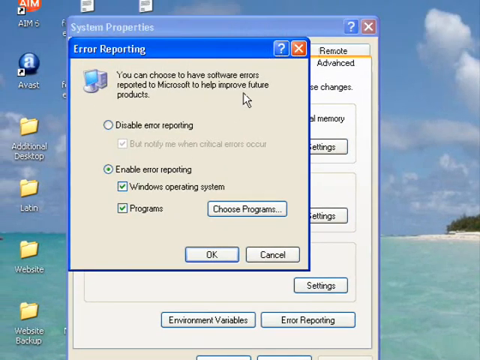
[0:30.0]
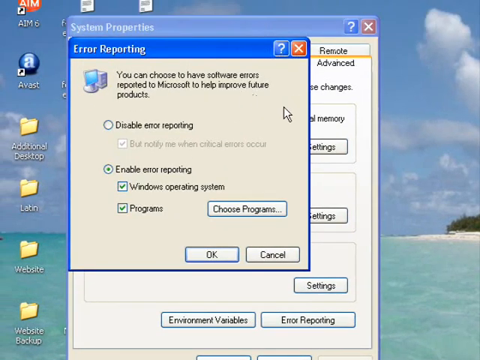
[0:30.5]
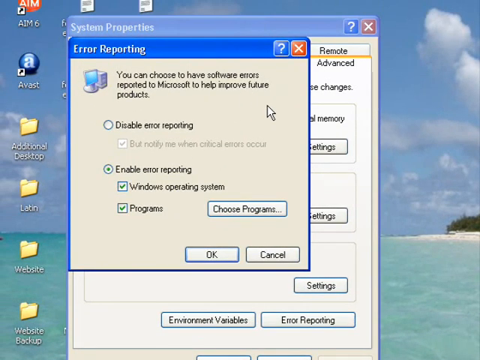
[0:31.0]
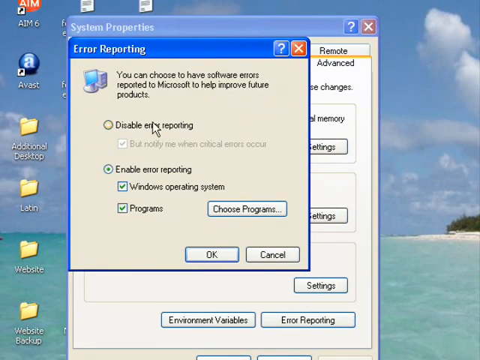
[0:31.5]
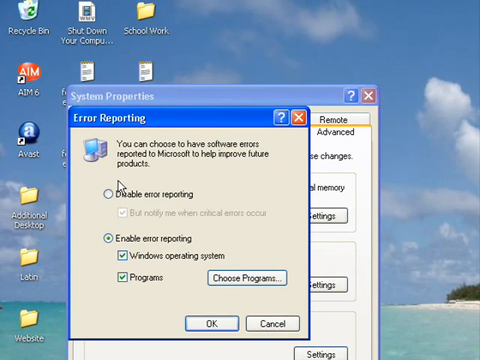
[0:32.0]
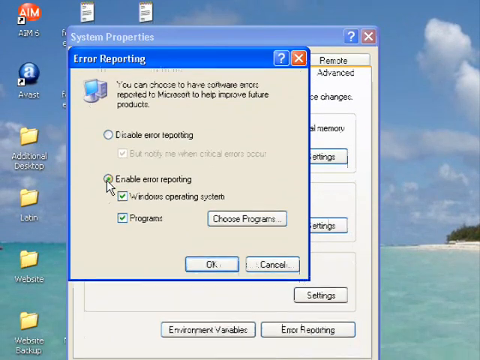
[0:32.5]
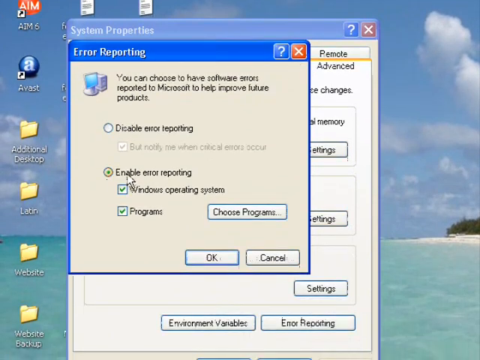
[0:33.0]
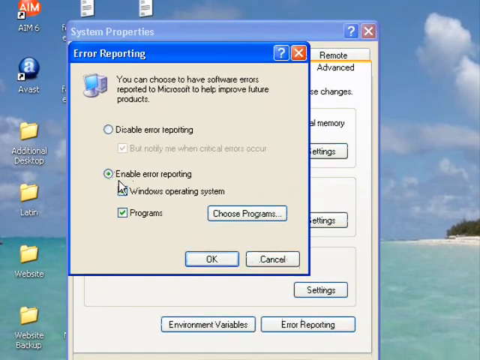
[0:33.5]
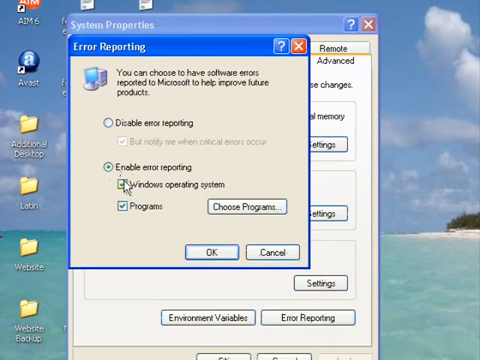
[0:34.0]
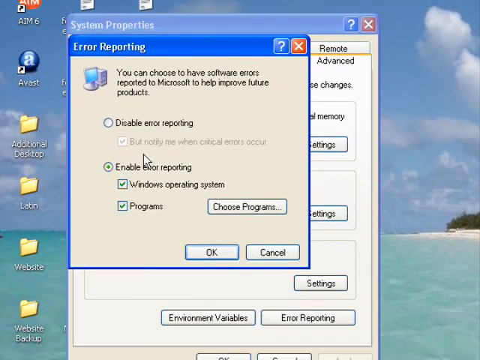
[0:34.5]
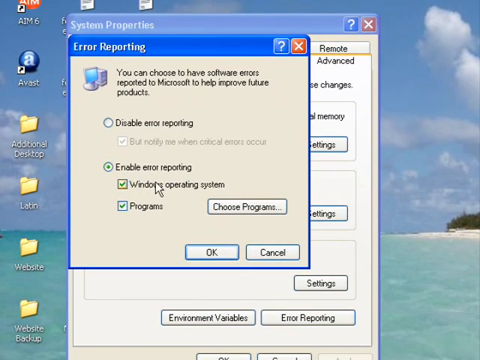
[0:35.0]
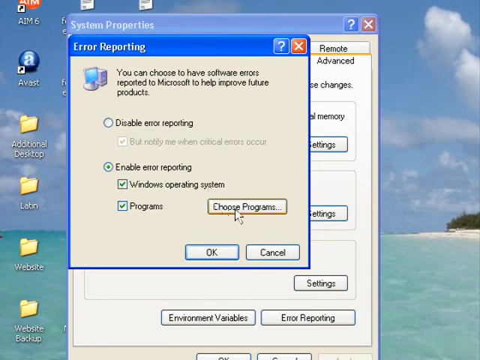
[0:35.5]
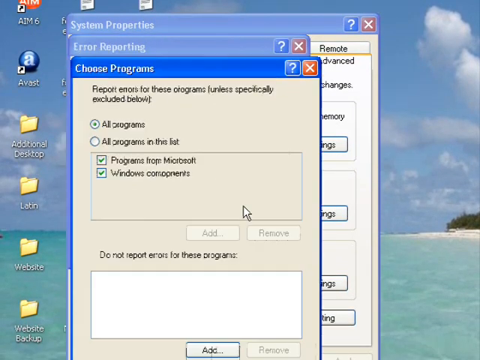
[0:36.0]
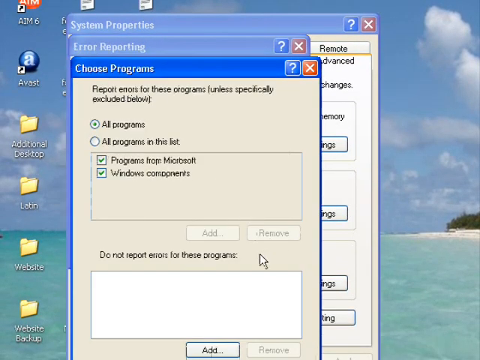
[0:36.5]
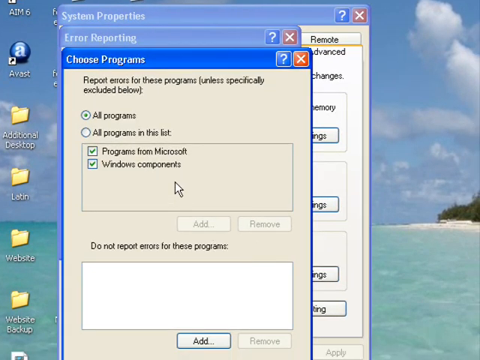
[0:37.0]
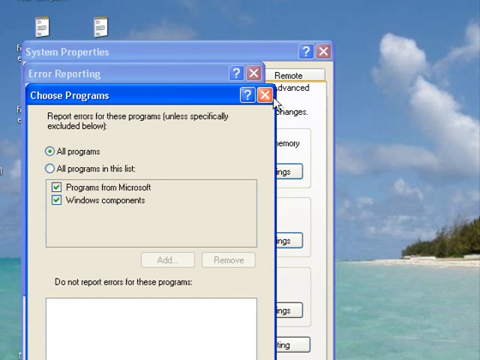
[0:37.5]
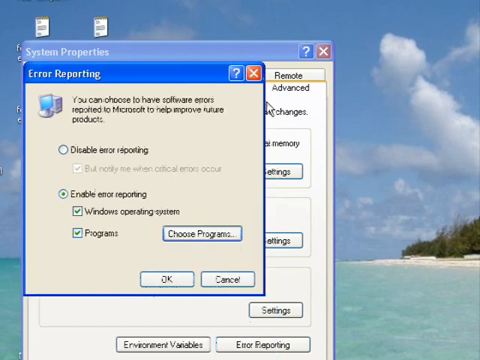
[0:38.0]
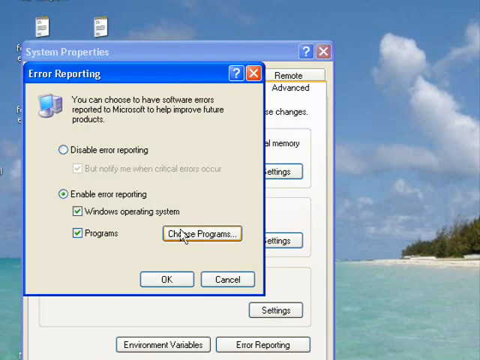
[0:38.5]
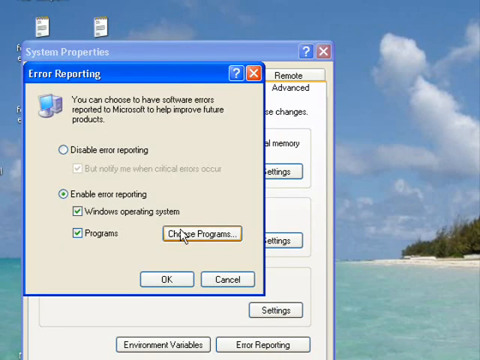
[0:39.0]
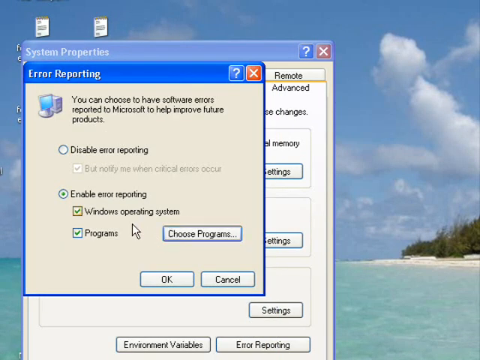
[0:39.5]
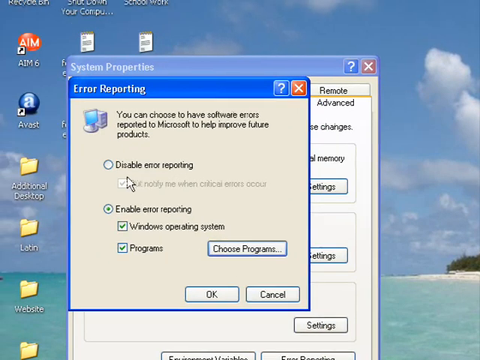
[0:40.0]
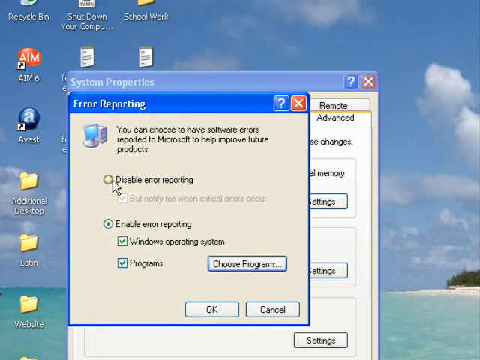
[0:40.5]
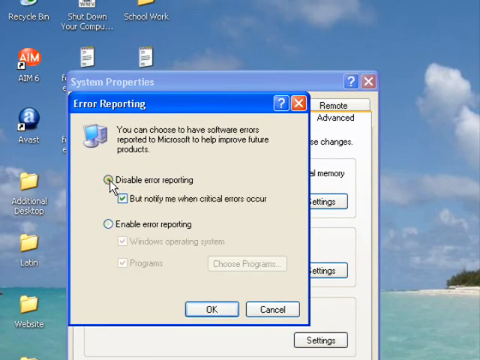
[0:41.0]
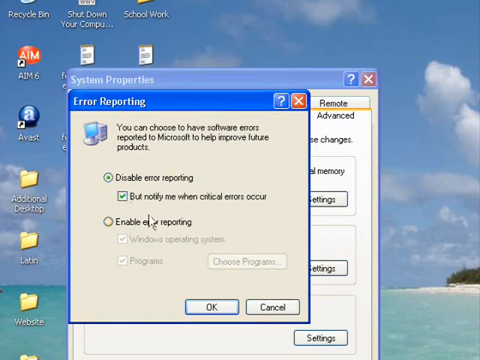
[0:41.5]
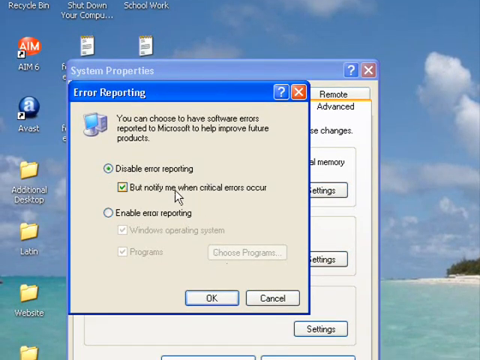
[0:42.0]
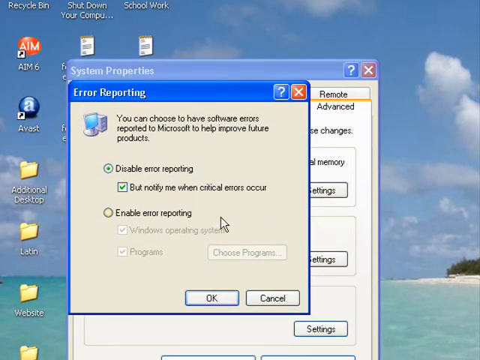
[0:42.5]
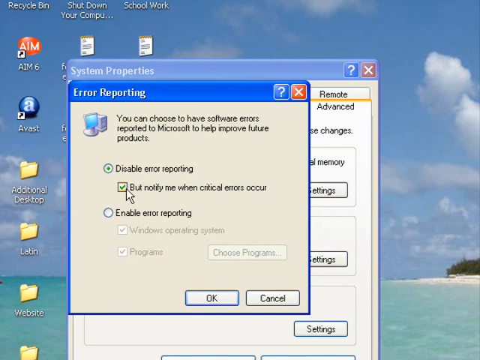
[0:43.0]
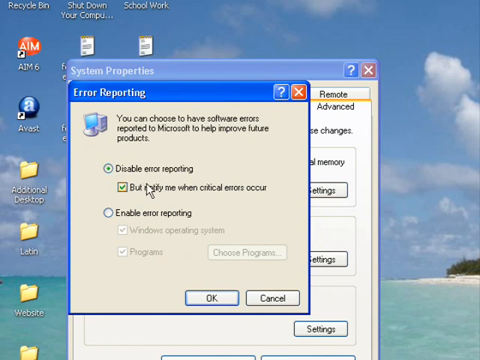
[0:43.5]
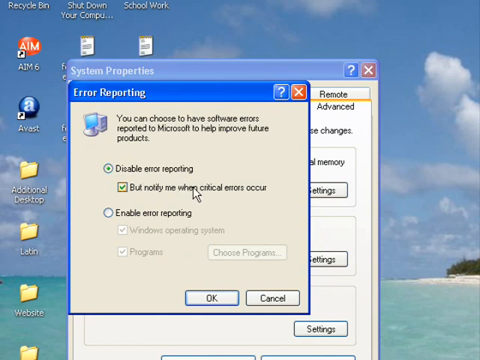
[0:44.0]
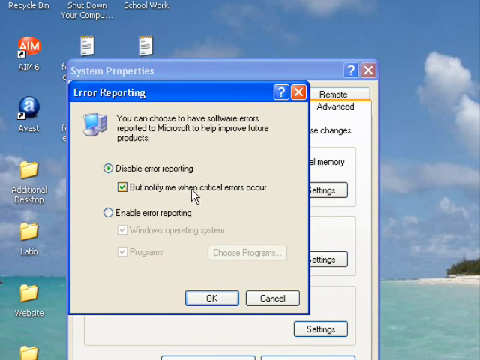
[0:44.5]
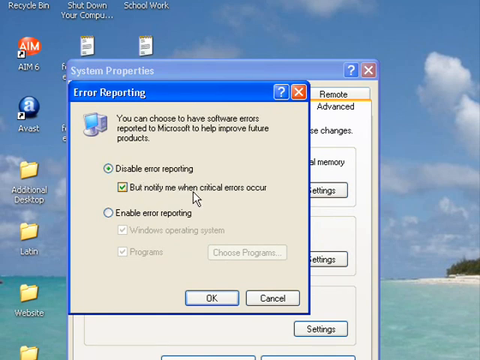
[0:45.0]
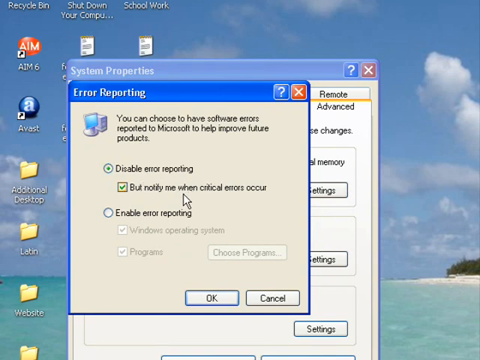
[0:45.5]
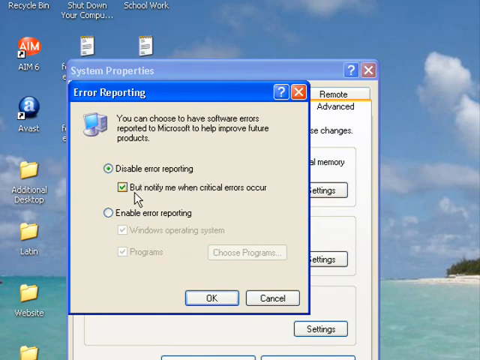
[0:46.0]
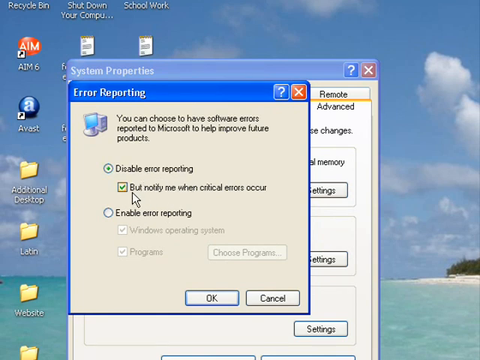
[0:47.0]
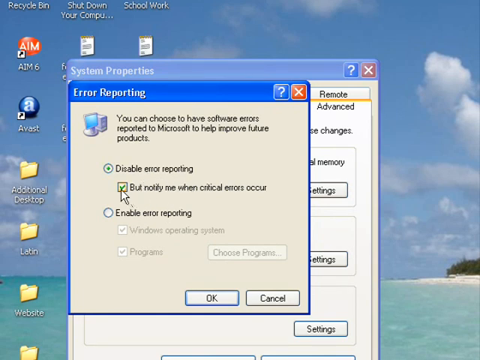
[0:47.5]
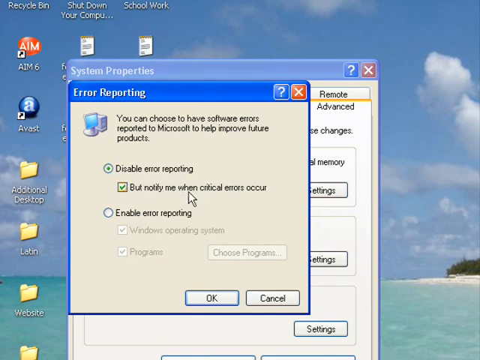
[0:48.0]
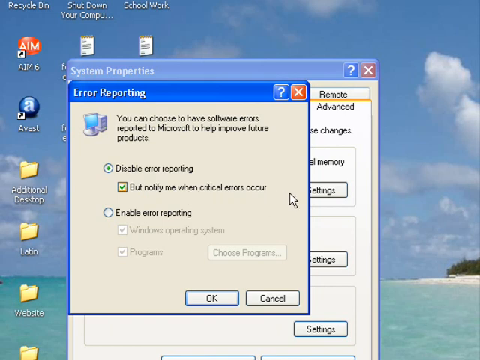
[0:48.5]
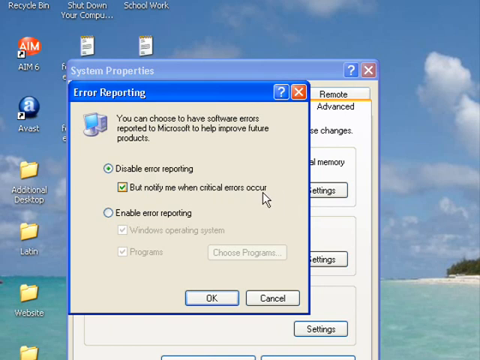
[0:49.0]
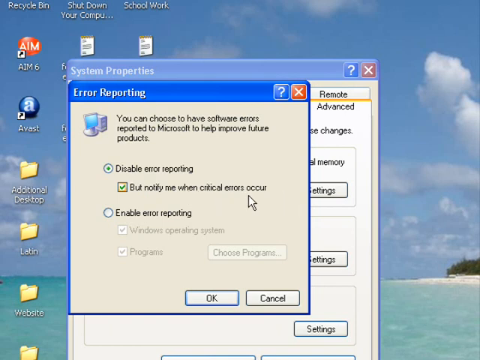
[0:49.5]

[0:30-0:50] The user goes to the option to enable error reporting and hovers over it, then clicks the "choose programs" subsection. He chooses to disable error reporting completely and keeps the default program choices the same. The other settings, such as performance and visual memory, are also left unchanged.